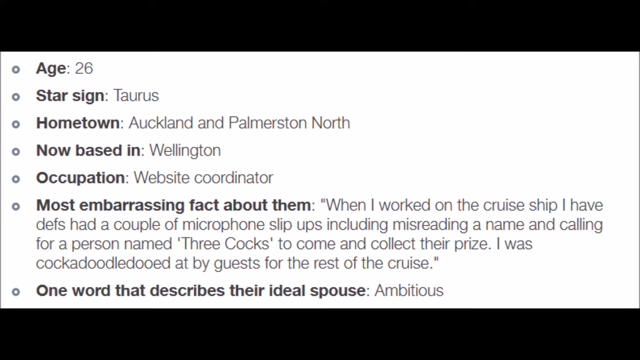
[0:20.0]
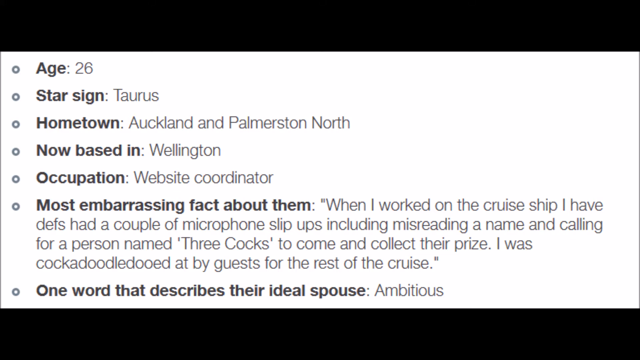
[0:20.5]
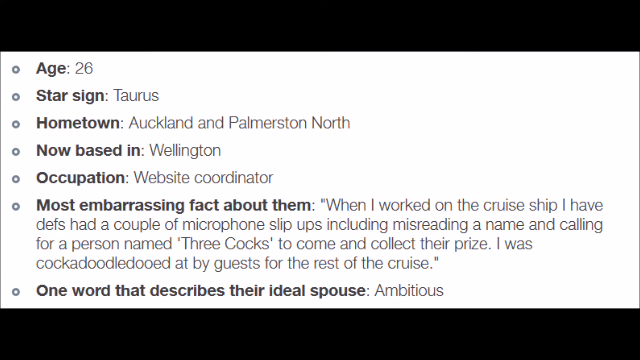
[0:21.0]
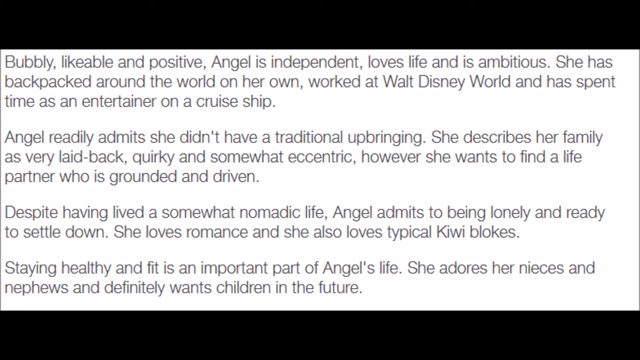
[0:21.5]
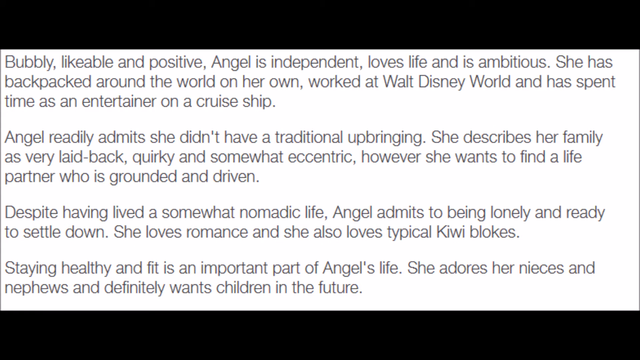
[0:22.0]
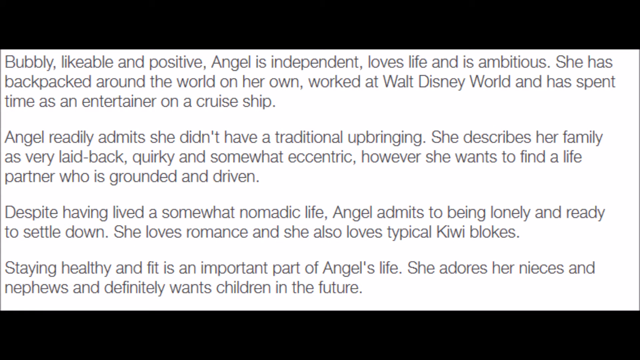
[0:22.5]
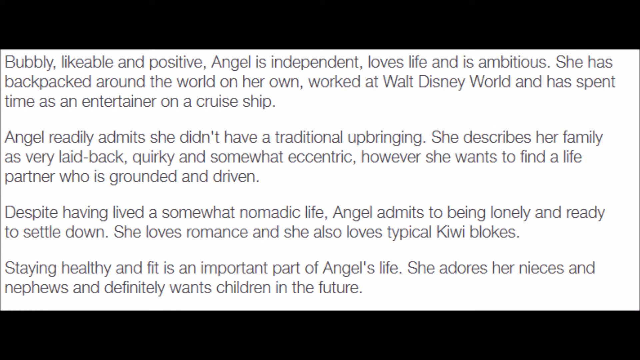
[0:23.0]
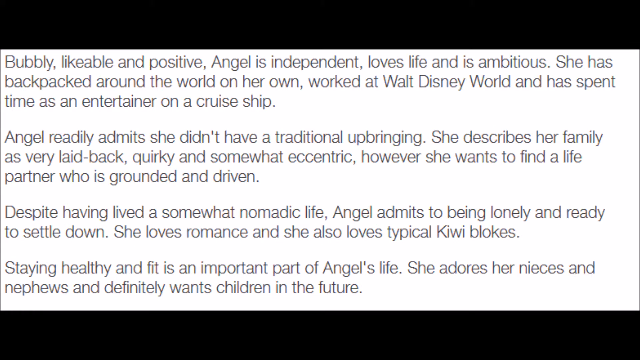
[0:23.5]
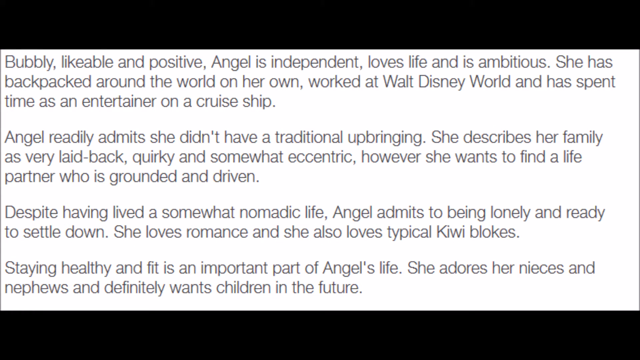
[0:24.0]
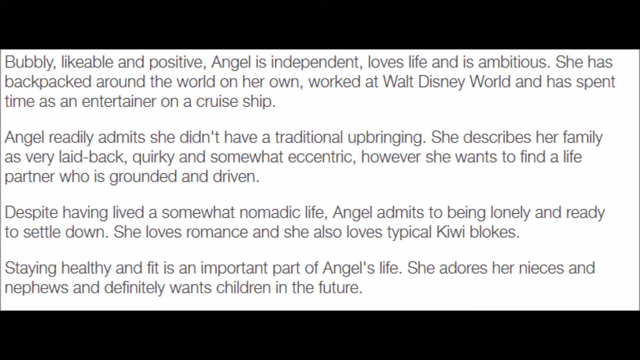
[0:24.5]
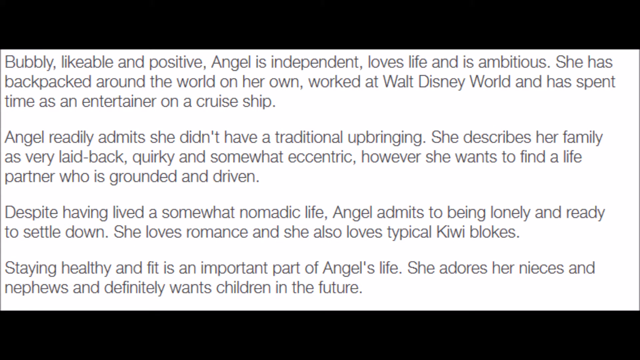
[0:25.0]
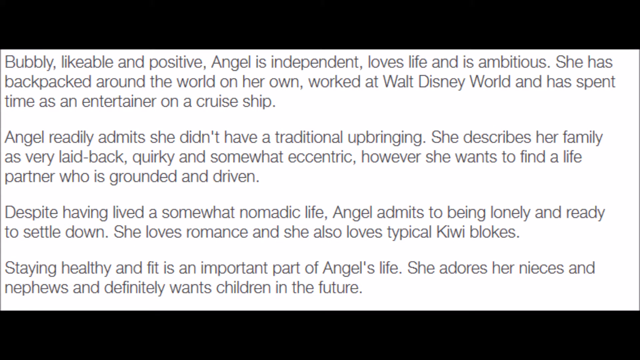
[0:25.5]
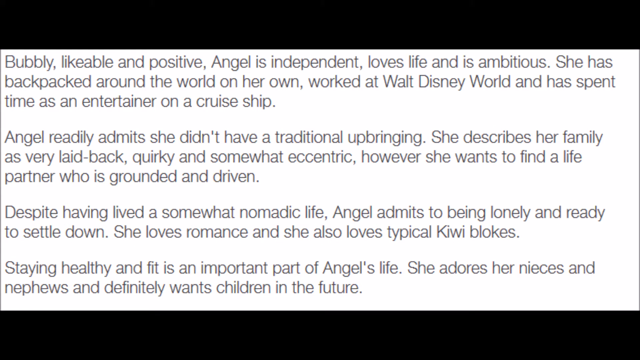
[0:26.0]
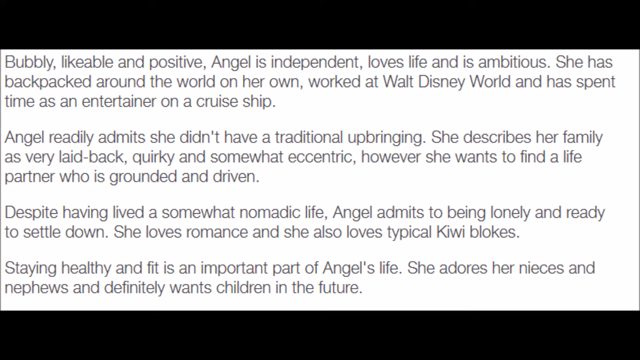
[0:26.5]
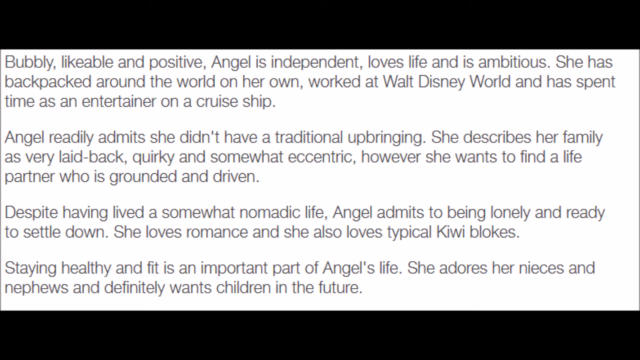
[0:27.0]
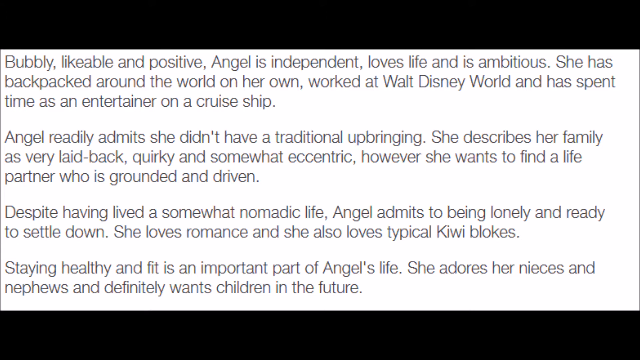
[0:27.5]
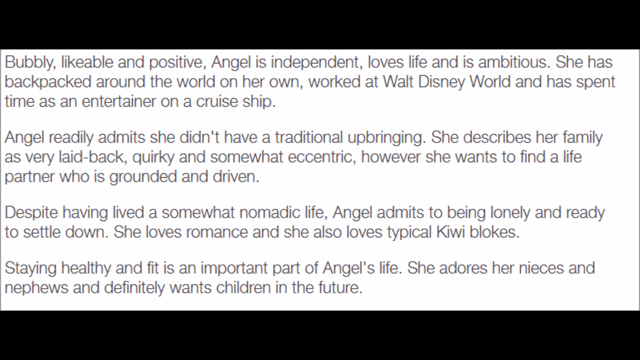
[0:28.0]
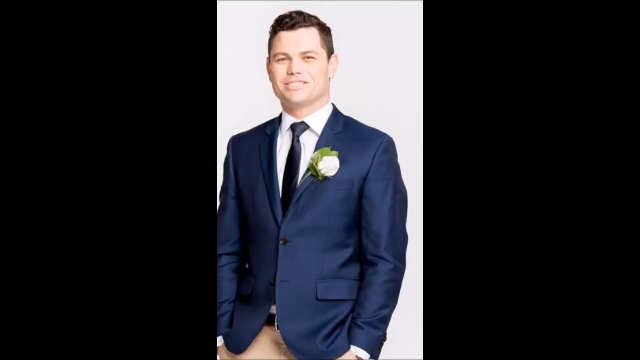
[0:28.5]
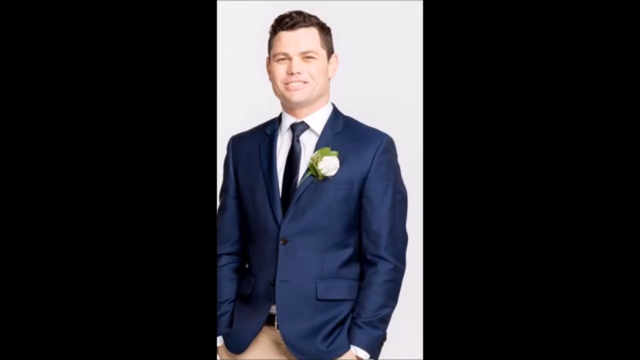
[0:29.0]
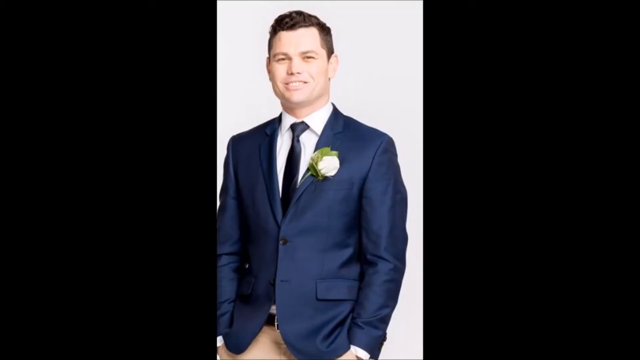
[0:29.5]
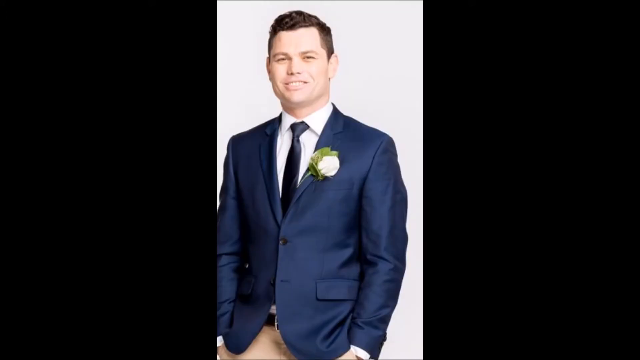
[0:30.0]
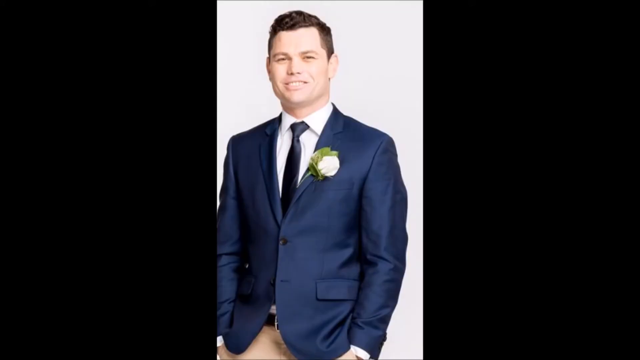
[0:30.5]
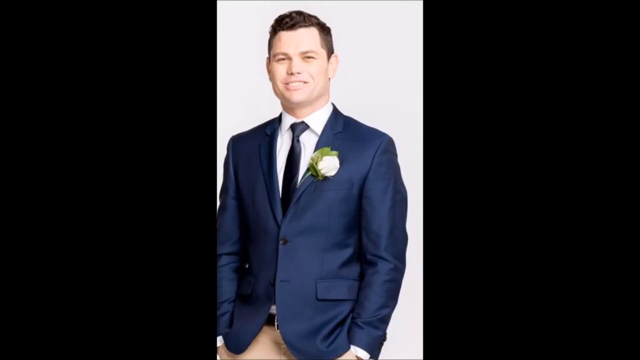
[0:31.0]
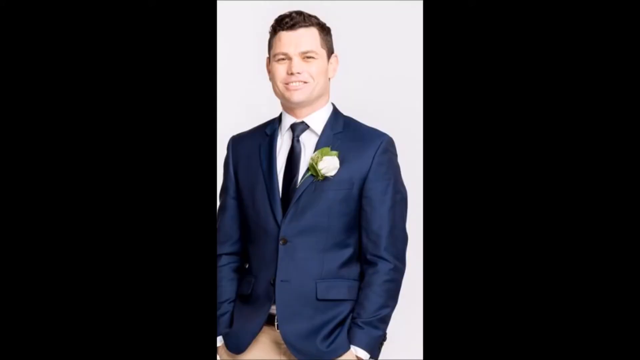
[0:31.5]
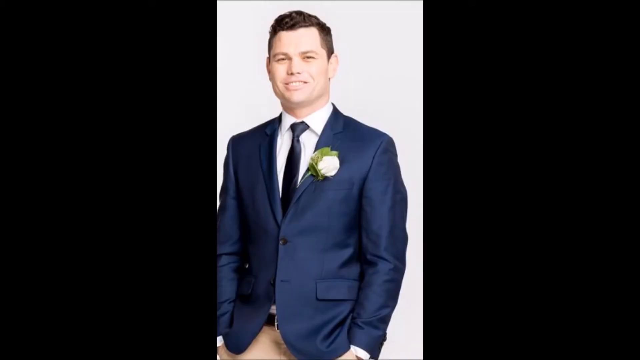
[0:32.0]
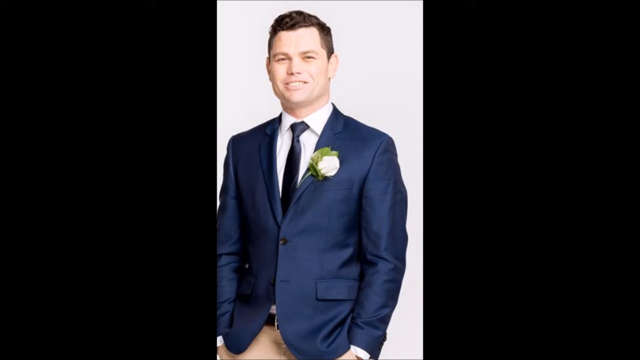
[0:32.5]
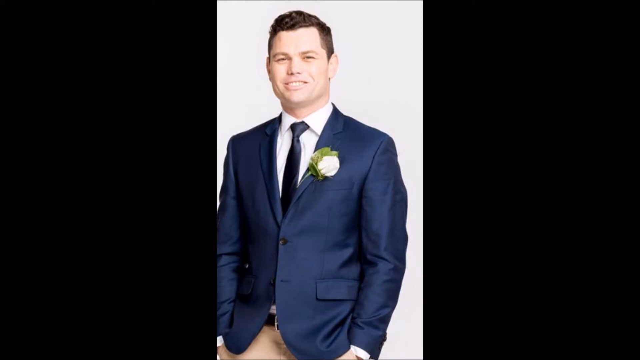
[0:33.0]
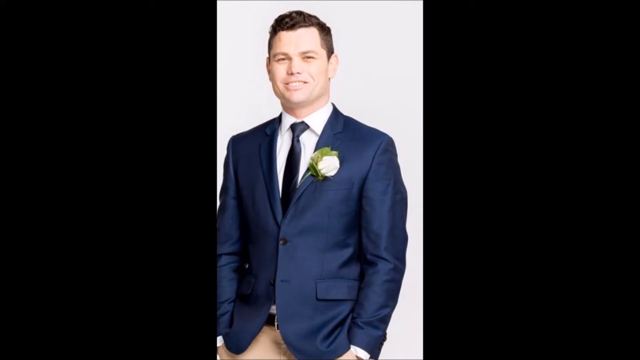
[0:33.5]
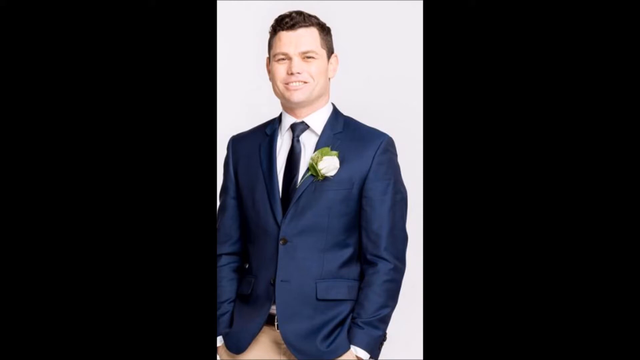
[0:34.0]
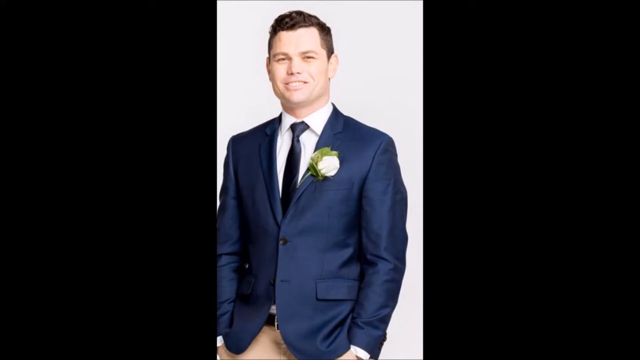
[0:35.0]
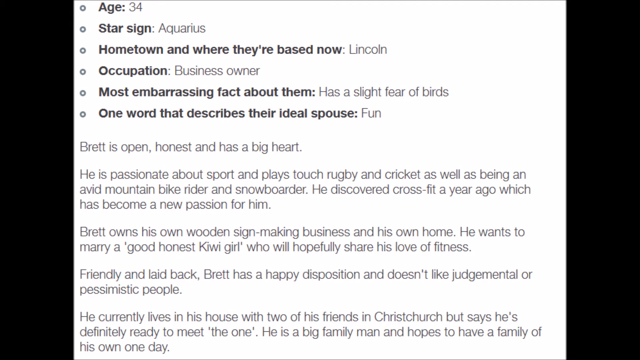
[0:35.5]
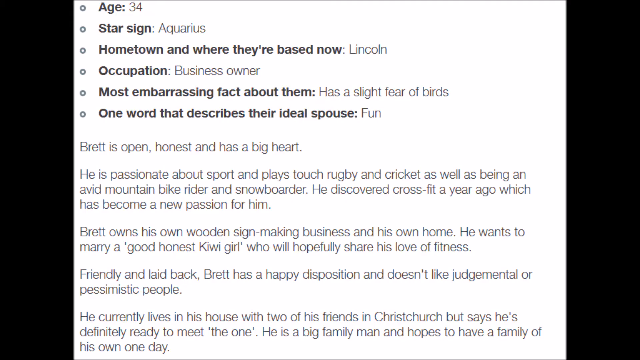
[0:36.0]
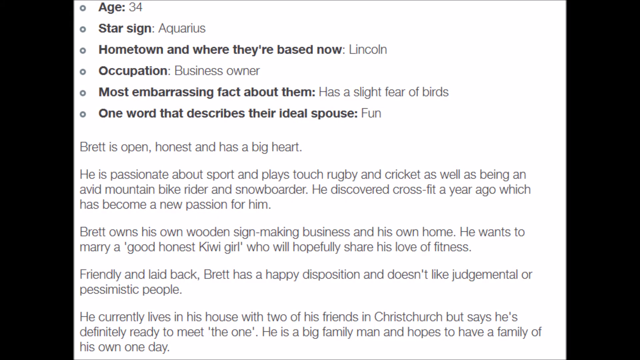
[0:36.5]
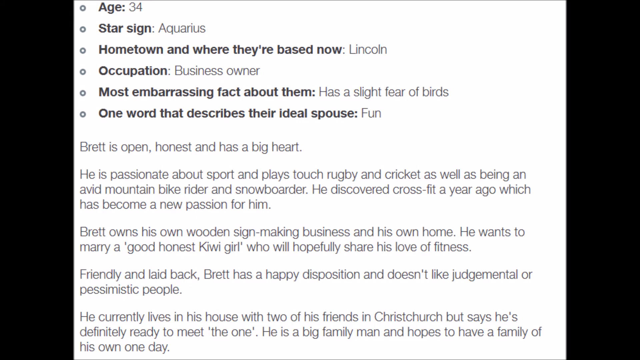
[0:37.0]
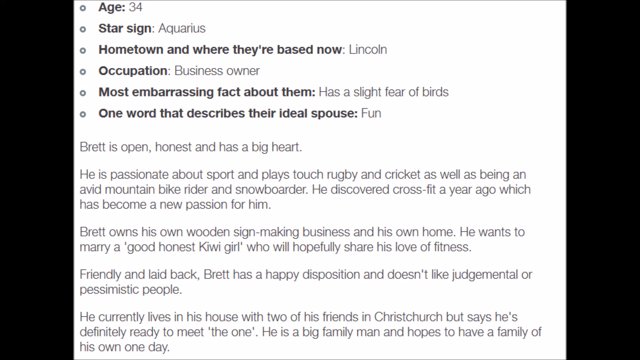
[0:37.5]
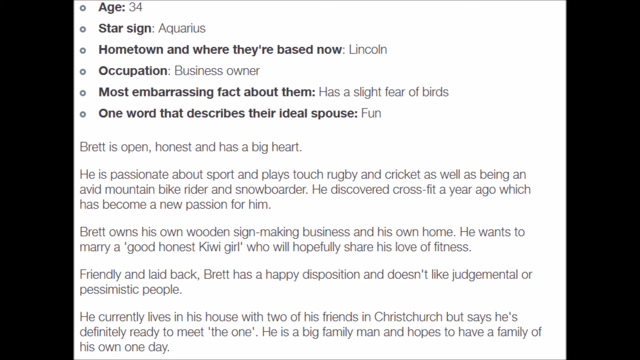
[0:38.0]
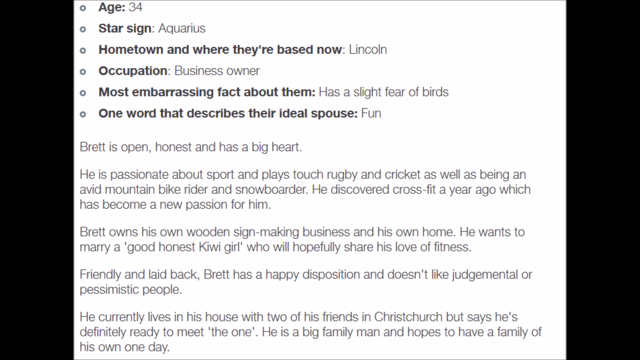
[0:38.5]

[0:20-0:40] A line of text reads "age 26", with hometown "Auckland and Palmerston North, now based in Wellington" and occupation "website coordinator". The most embarrassing fact reads "When I worked on a cruise ship, I had a couple of microphone slip-ups, including mispronouncing a name and calling for a person named Free Cox to come and collect their presents." The one word describing the ideal spouse is "ambitious". Another block of text follows, in black font on a white screen: "likable and positive, Angel is independent, loves life, is ambitious", and it mentions that she has backpacked around the world on her own, works at Walt Disney World and has spent time as an entertainer on a cruise ship. It also reads "Staying healthy and fit is a part of Angel's life. She adores her nieces and nephews and definitely wants to have children in the future." Next comes a picture of a man in a blue suit with a flower pinned to it. Text beside it reads "age 34", star sign "Aquarius", hometown and where they are based now "Lincoln", occupation "business owner", most embarrassing fact "has a slight fear of birds", and the one word describing the ideal spouse, "fun". His description includes "Brett is open" and "Brett also has his own wooden sign making business".